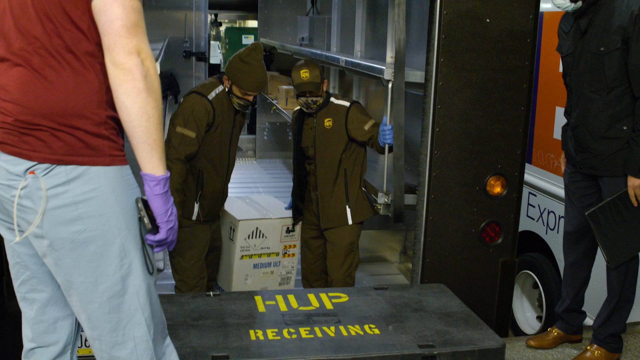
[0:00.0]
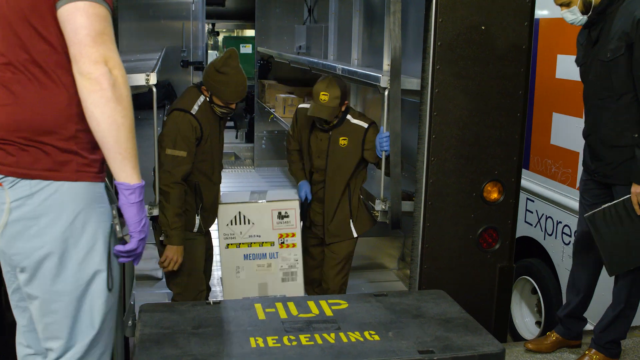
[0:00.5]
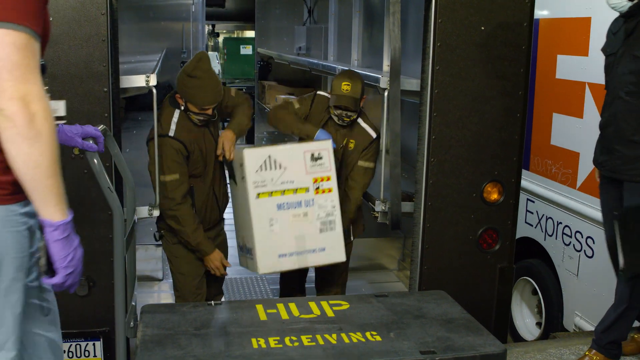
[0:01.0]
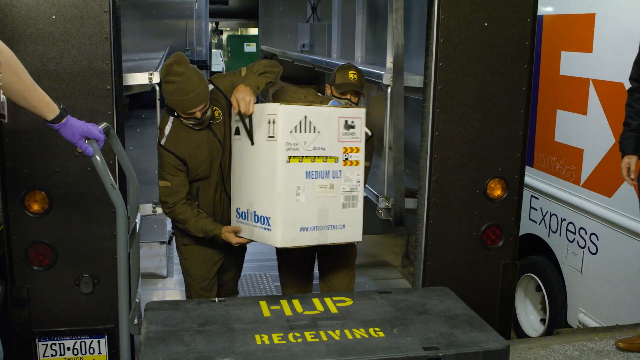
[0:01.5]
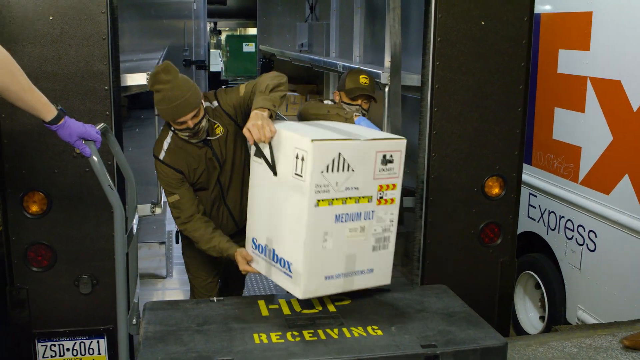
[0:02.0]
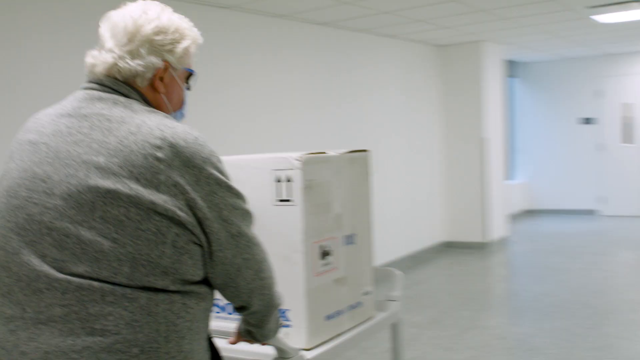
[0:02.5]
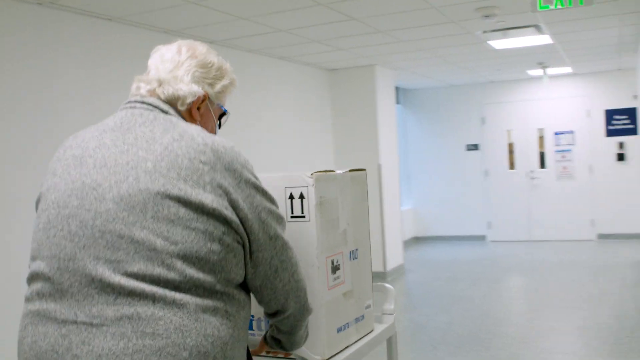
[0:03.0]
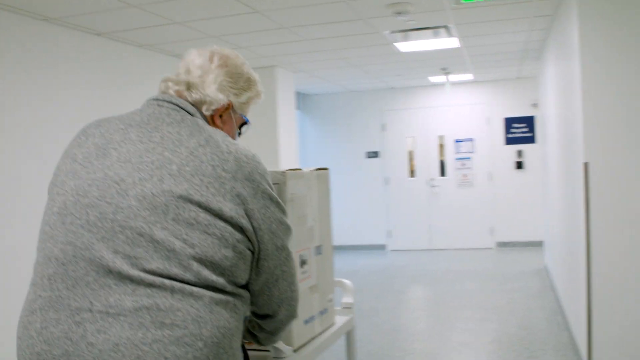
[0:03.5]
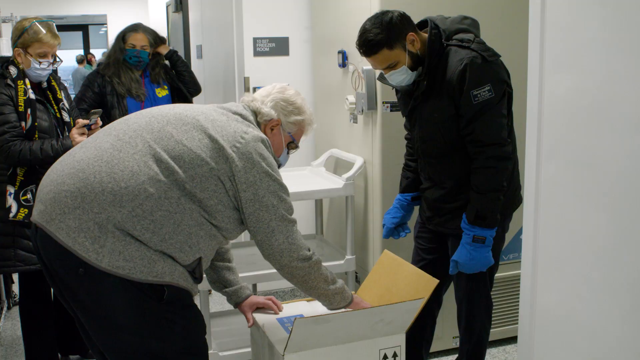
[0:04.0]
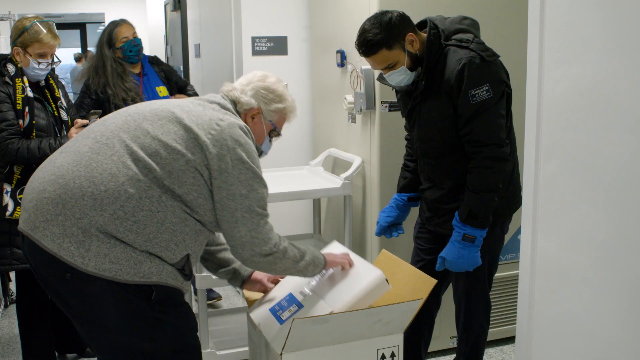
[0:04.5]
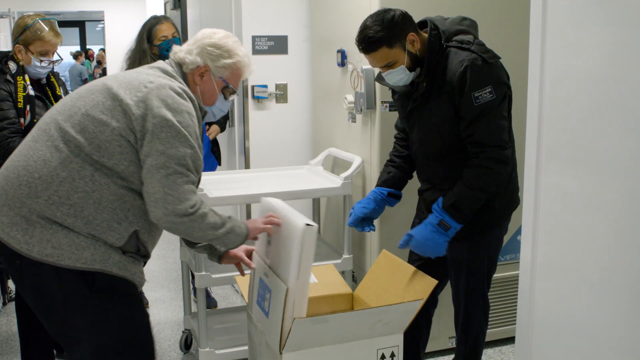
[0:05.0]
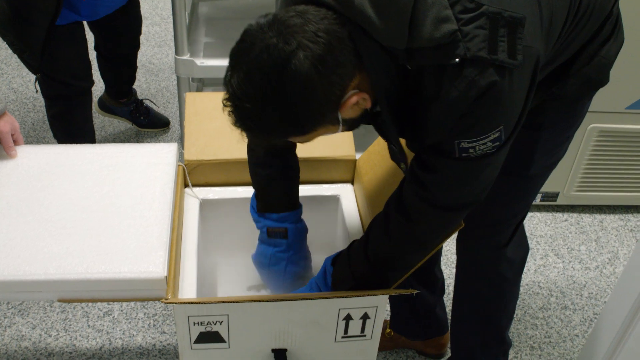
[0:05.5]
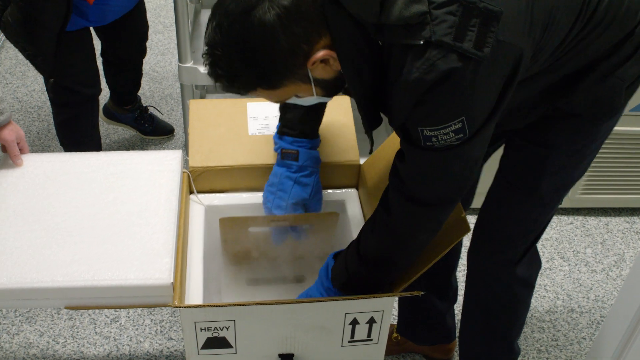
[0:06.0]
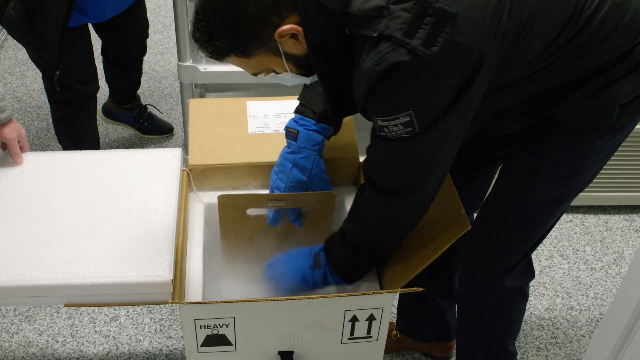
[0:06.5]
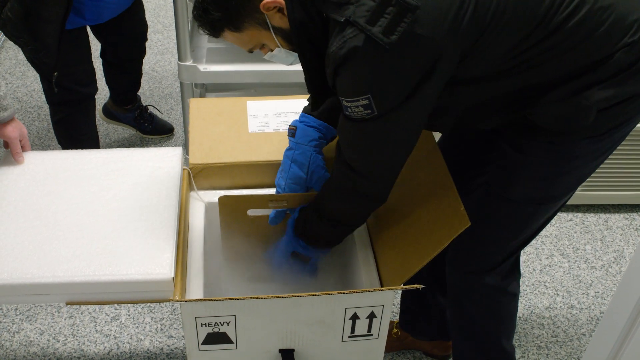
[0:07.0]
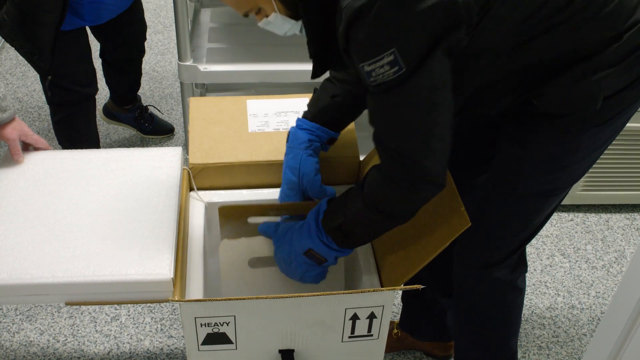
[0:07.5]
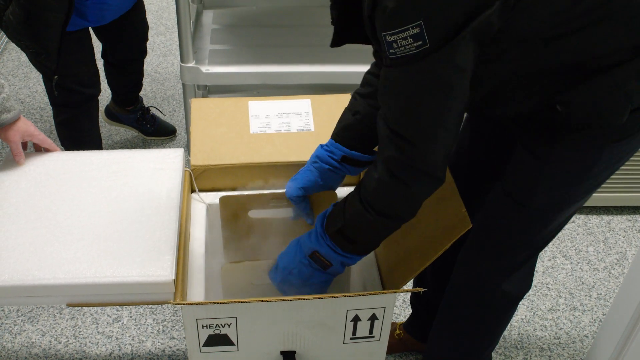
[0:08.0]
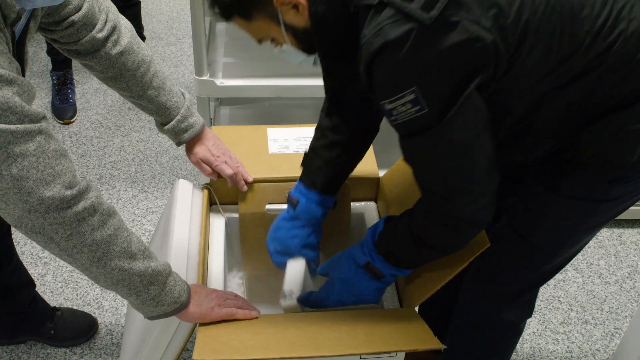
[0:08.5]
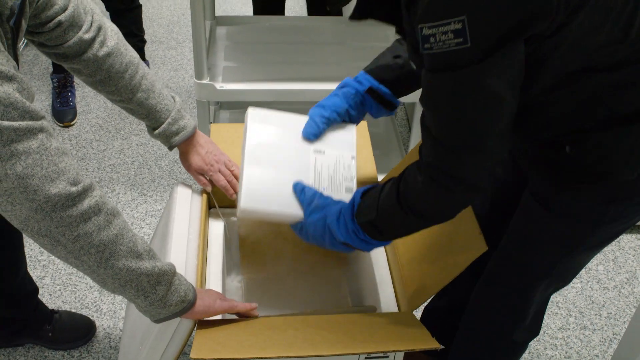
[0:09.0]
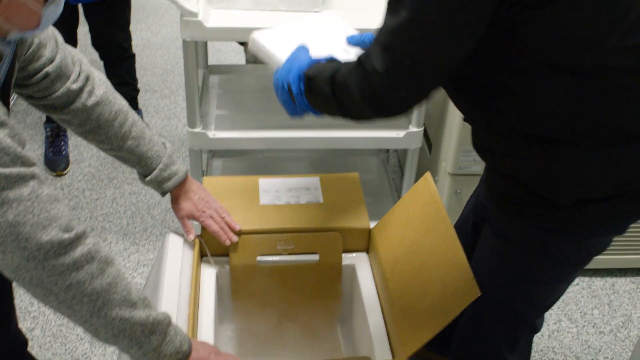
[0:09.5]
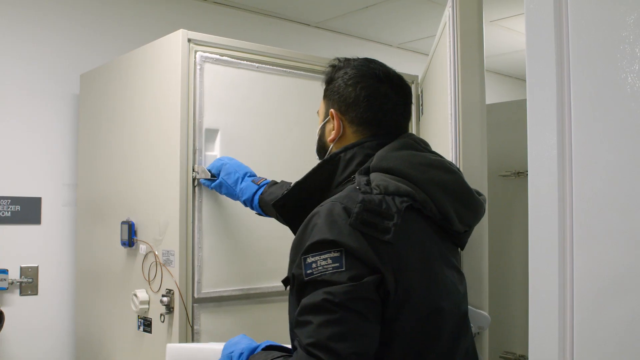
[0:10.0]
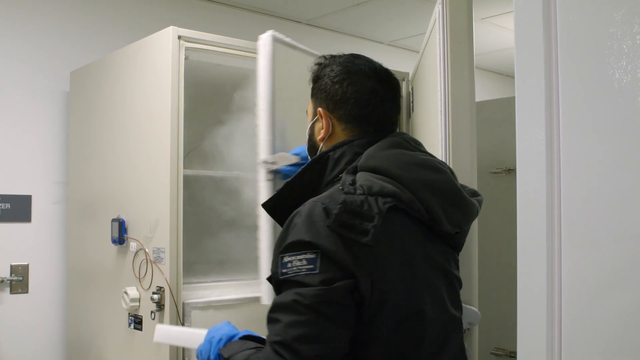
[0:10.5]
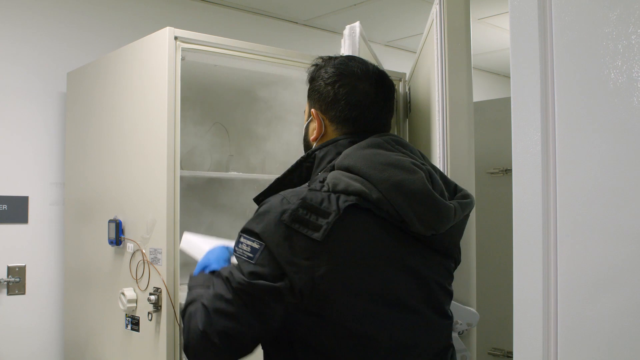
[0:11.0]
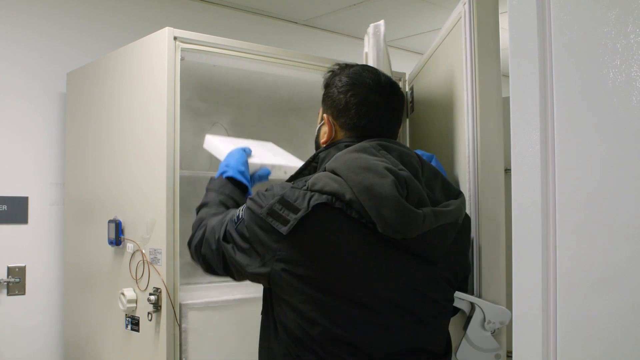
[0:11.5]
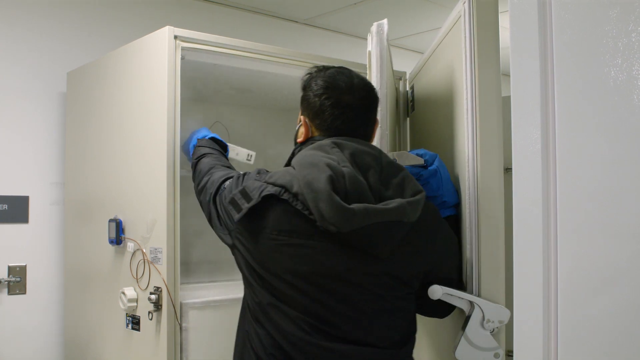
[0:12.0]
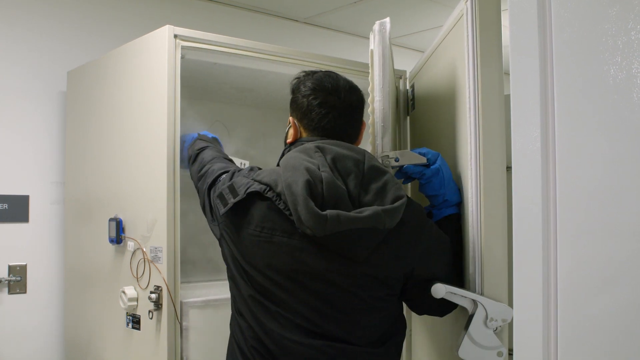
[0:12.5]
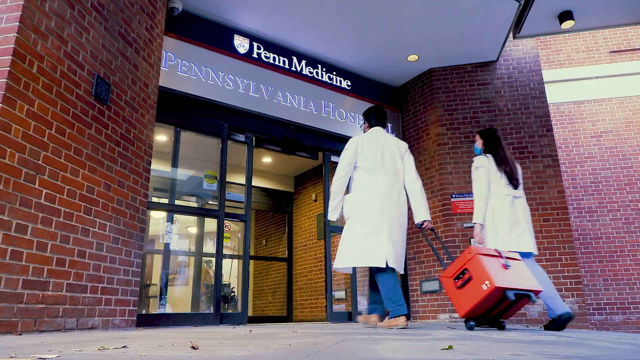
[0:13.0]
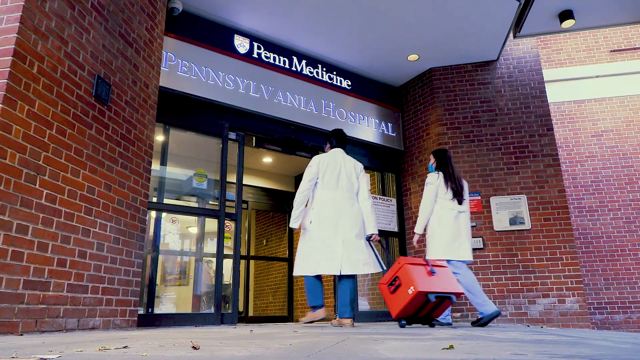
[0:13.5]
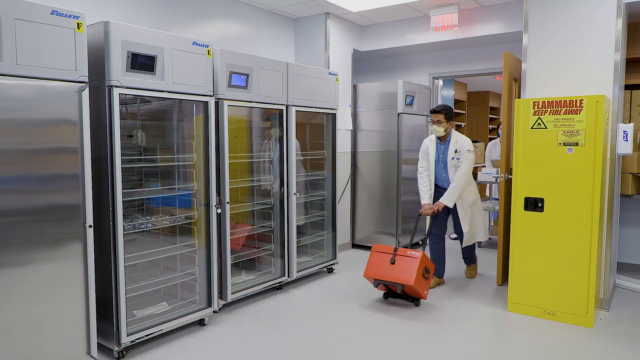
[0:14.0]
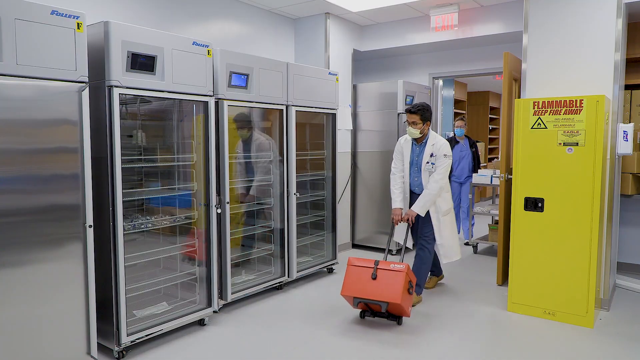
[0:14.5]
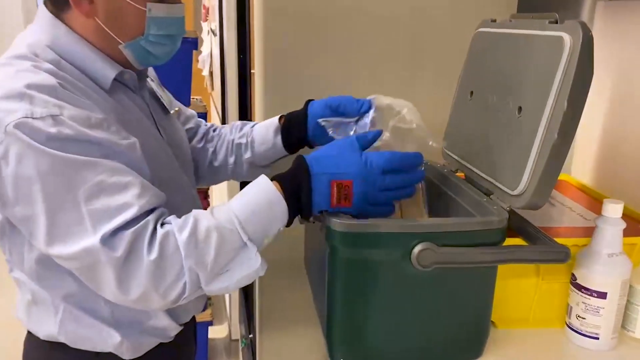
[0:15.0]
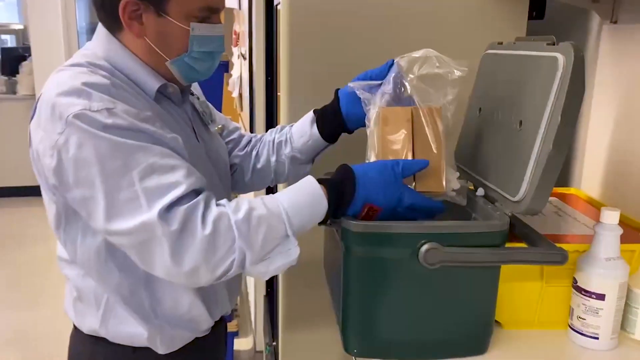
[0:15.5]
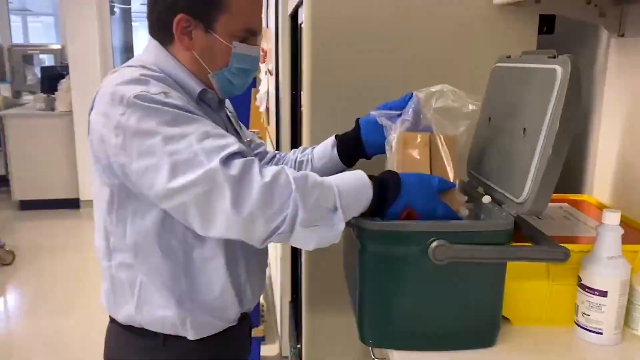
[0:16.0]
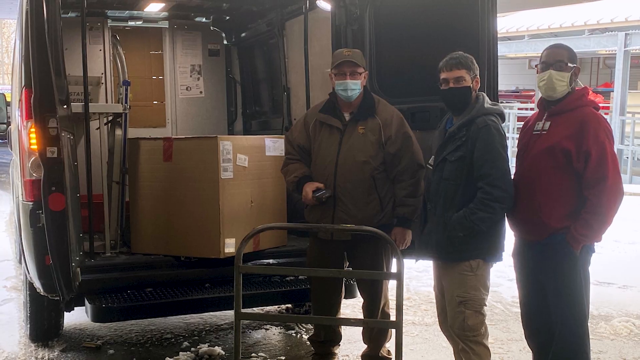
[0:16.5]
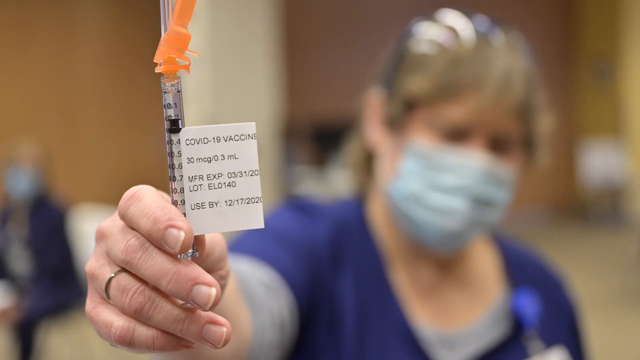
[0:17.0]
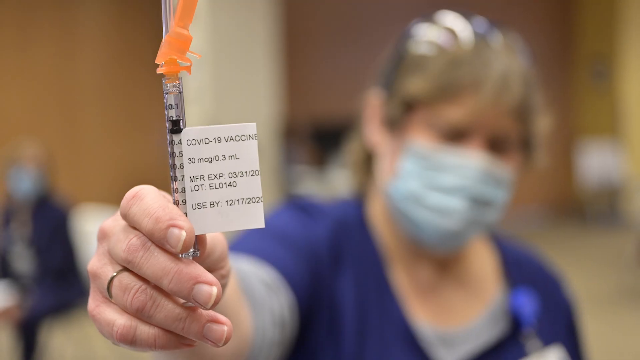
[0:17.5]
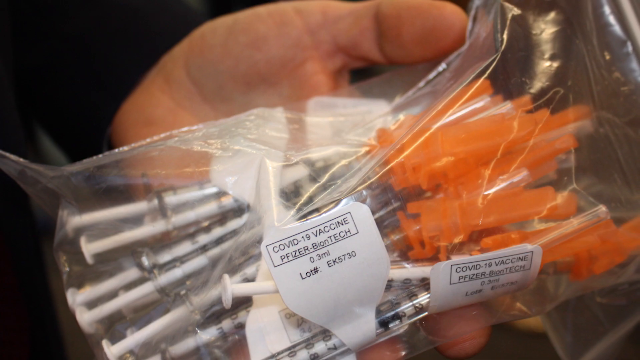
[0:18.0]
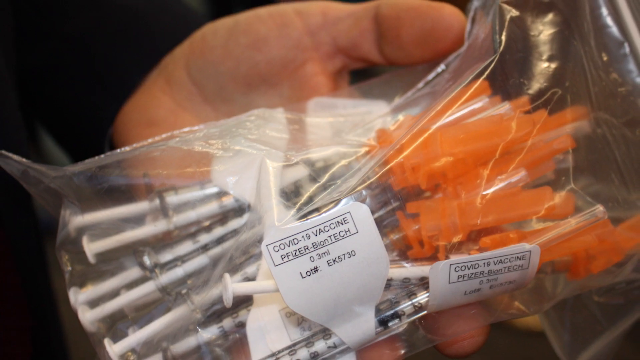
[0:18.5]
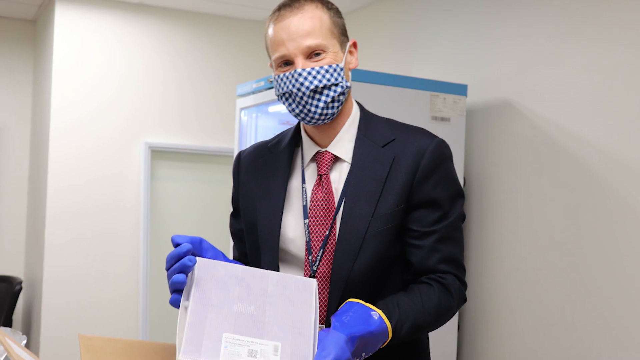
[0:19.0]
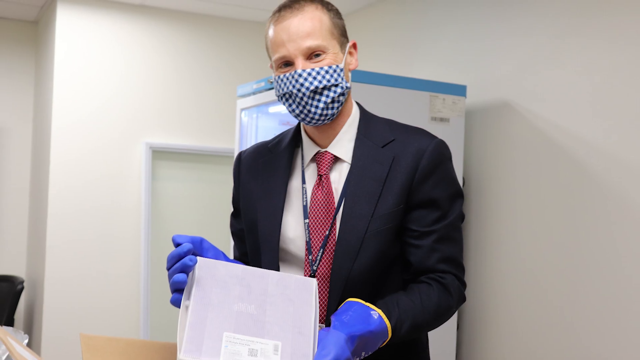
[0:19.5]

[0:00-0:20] The view is from inside the back of a truck, where two men by the loading doors at the back have lifted a white box. They stand on either side of the box. One holds it with his left hand and the other with his right. Each lifts with the hand holding the box, high enough to get the other hand underneath: the man on the left puts his right hand under the box and the man opposite puts his left. In this symmetrical movement they lift the box onto the back of the truck. Almost instantly the scene cuts to a rather thick-set man with a big mop of very white hair pushing the same box quite swiftly along what looks like a hospital corridor, very white and clinically bright. The scene cuts to the end room, where he opens the box across from another man. The older, white-haired man leans into the box, pulling it open with his right hand while his left hand steadies the lid. The man on the other side of the box wears blue gloves that look like they could keep hands from getting cold, and a warm black jacket. Both wear masks over their mouth and nose. The man in the blue gloves reaches into the box and dry ice flies up everywhere, suggesting the contents are either organs for transport or vaccines. The man in black, who has been handed a package about two inches wide and about a foot in width, opens the freezer door just behind him and puts the package in the freezer. The scene then cuts to the entrance of Penn Medicine, Pennsylvania Hospital, filmed from a very low point of view. Two adults in white lab coats walk into the hospital foyer, and the main doors and the brick walls on either side of them take up most of the shot.